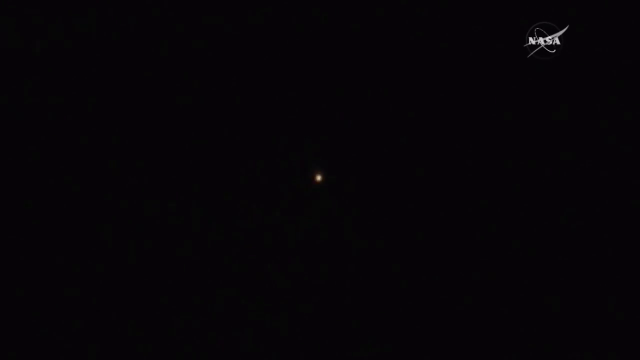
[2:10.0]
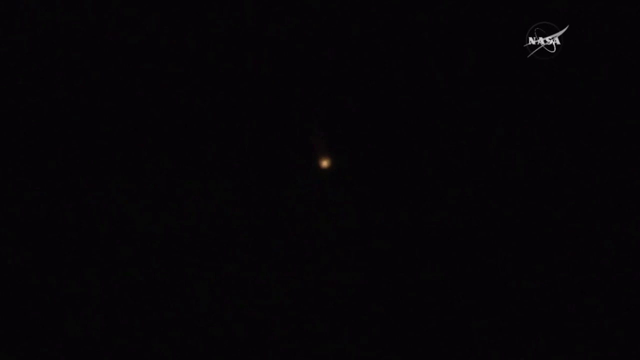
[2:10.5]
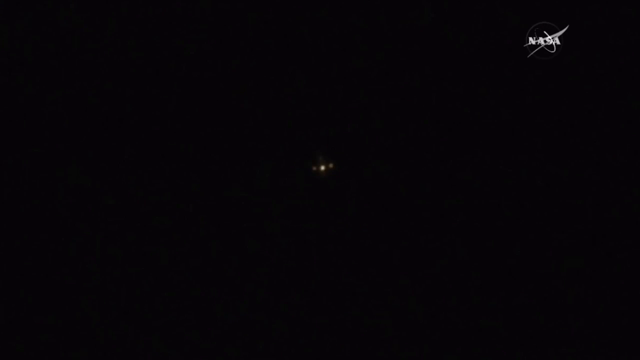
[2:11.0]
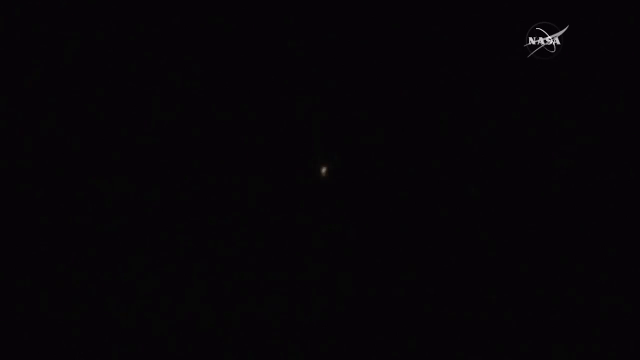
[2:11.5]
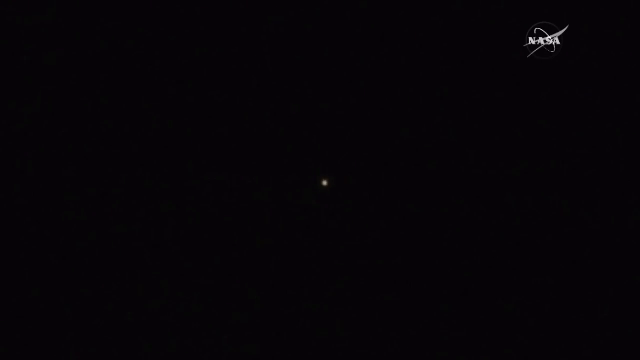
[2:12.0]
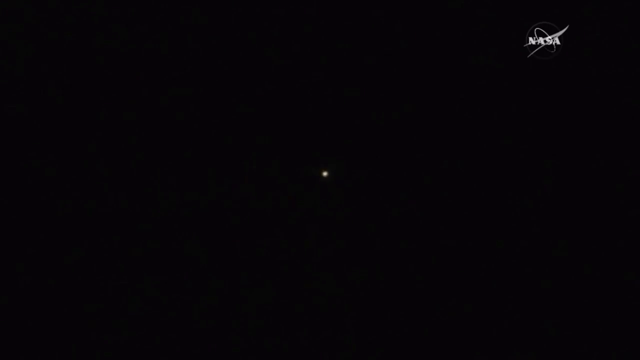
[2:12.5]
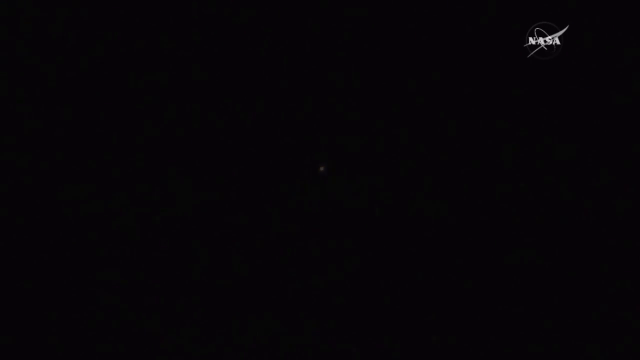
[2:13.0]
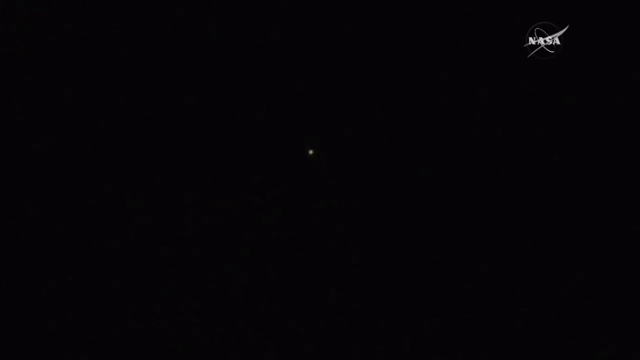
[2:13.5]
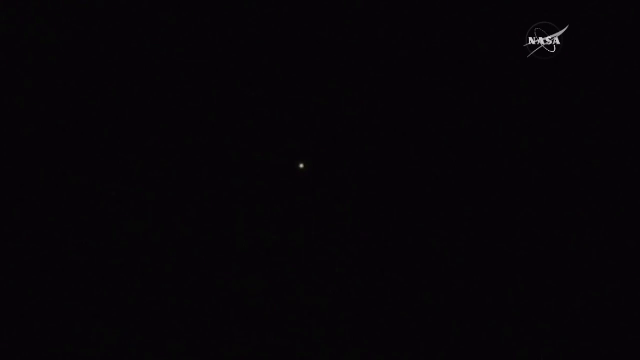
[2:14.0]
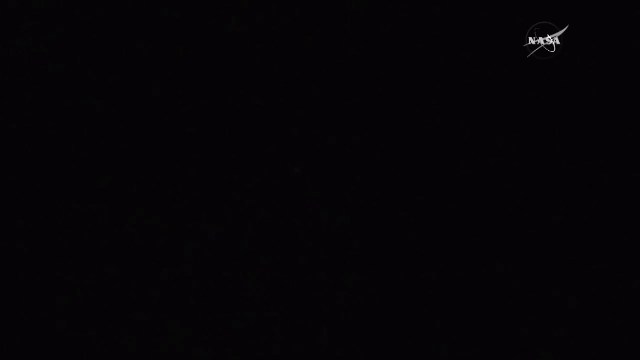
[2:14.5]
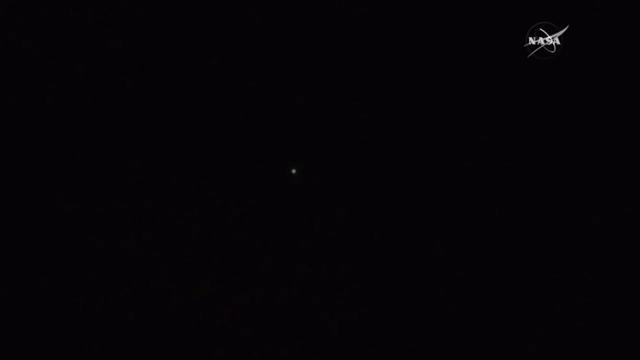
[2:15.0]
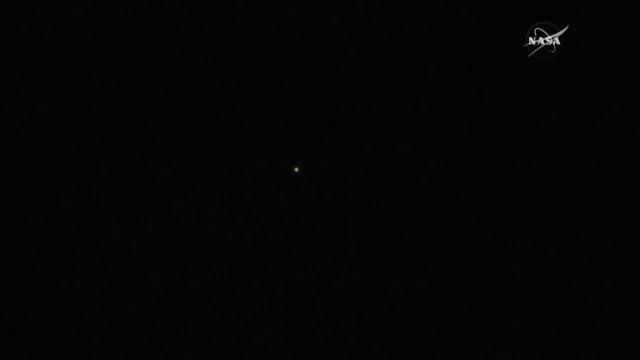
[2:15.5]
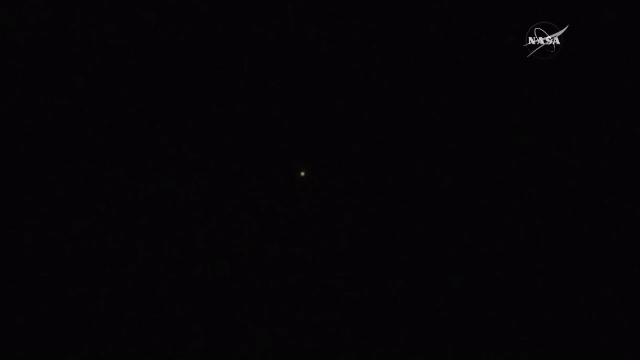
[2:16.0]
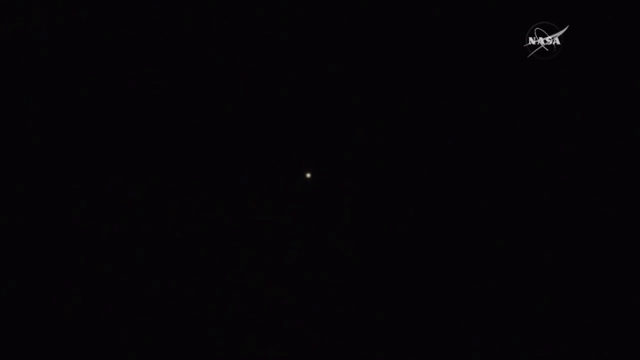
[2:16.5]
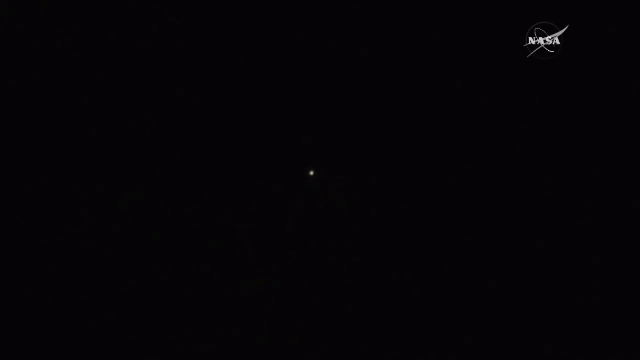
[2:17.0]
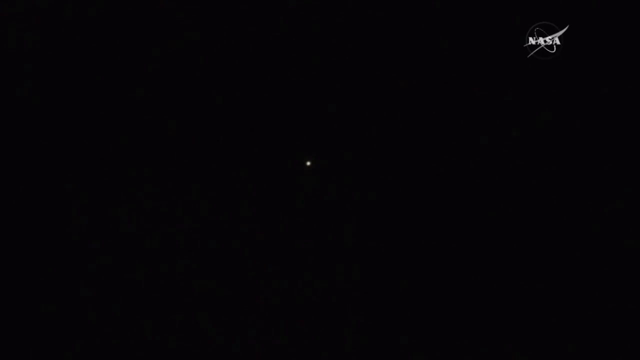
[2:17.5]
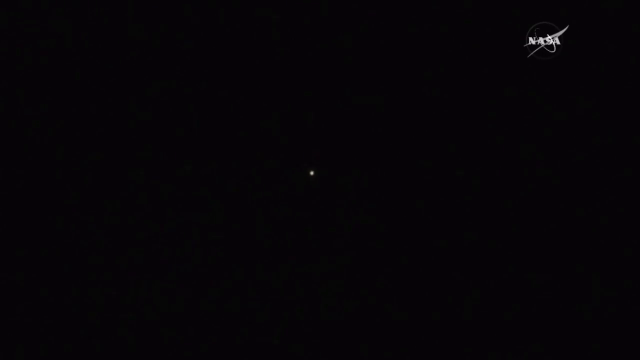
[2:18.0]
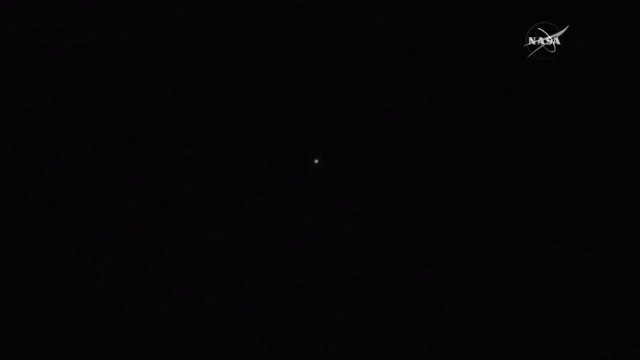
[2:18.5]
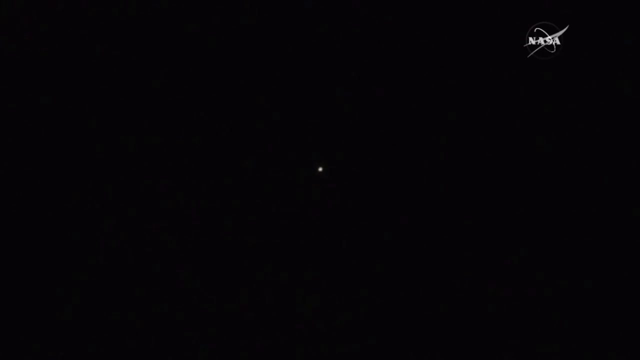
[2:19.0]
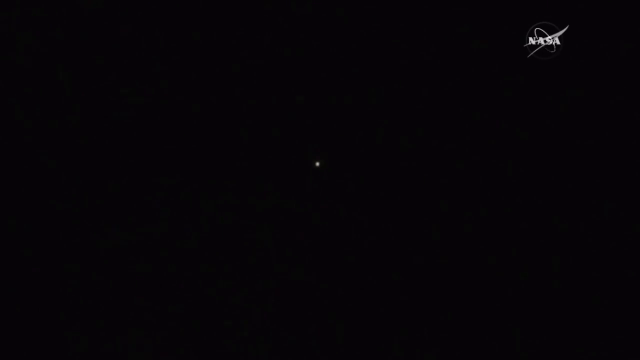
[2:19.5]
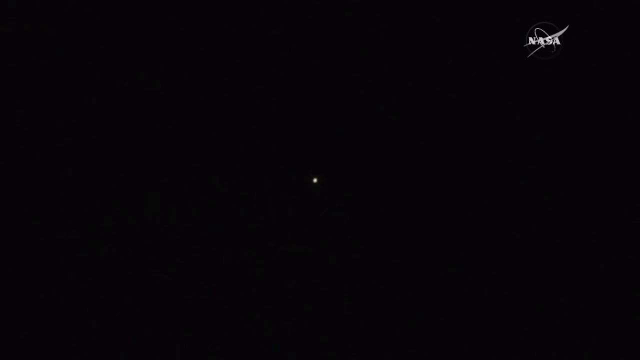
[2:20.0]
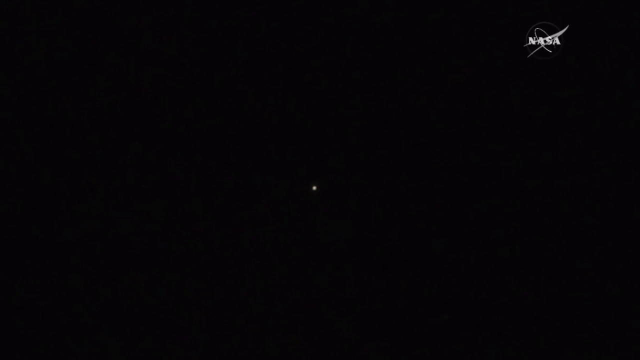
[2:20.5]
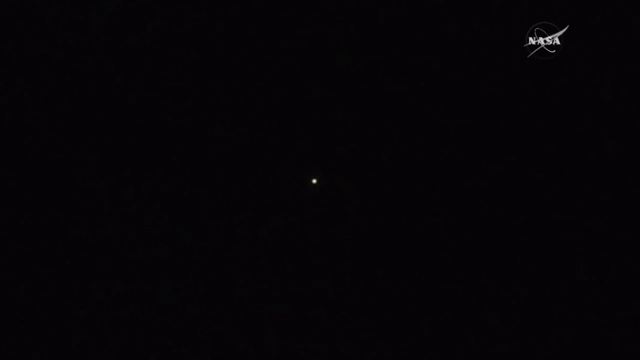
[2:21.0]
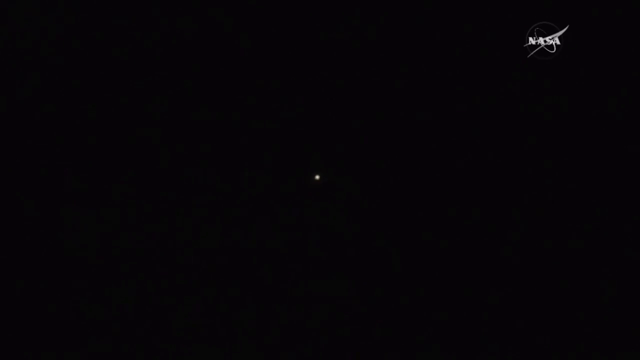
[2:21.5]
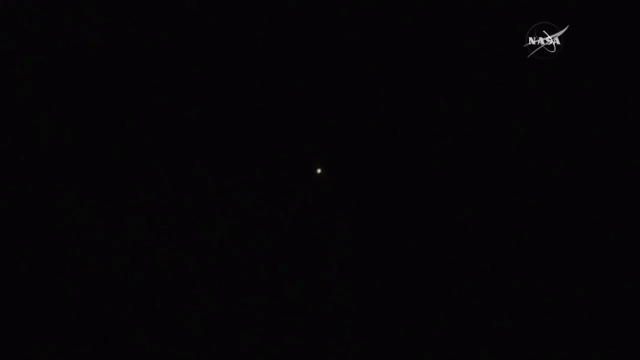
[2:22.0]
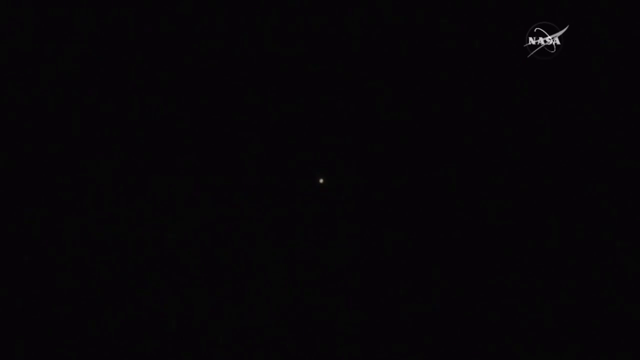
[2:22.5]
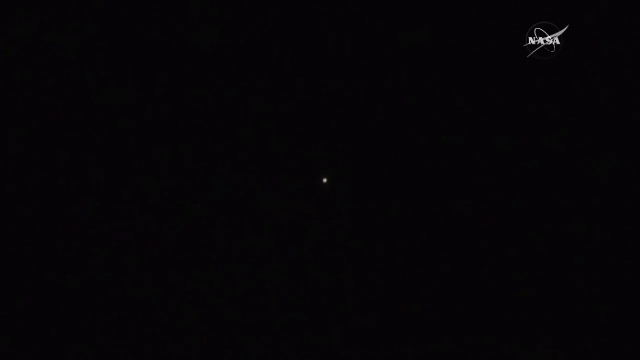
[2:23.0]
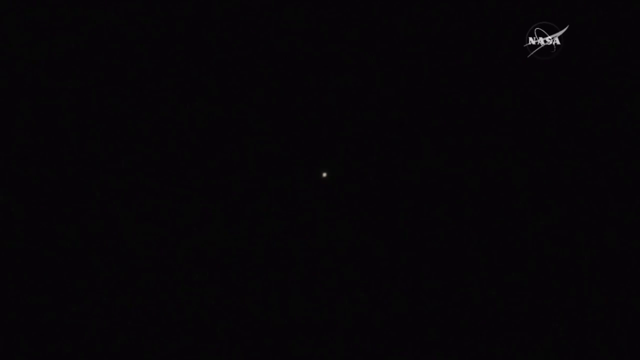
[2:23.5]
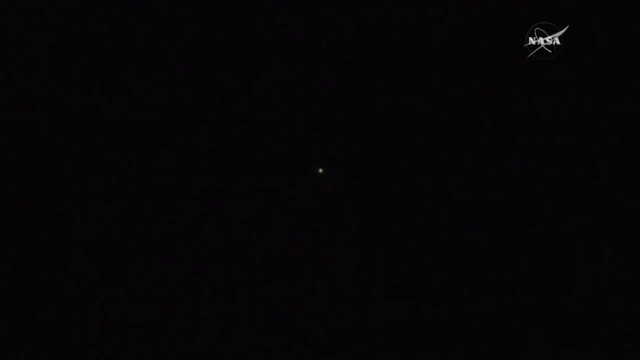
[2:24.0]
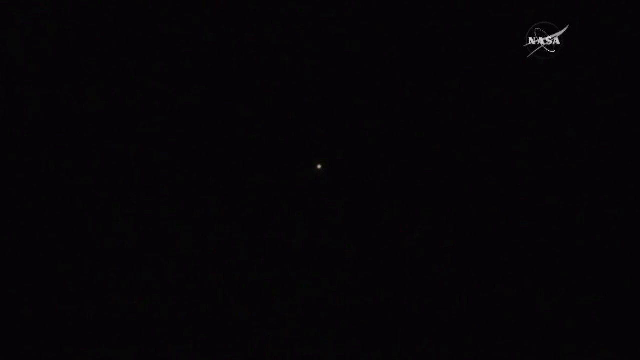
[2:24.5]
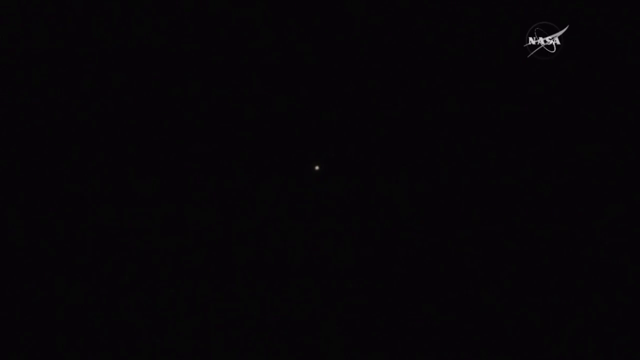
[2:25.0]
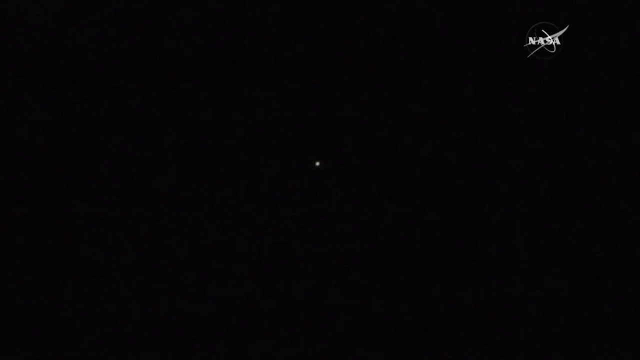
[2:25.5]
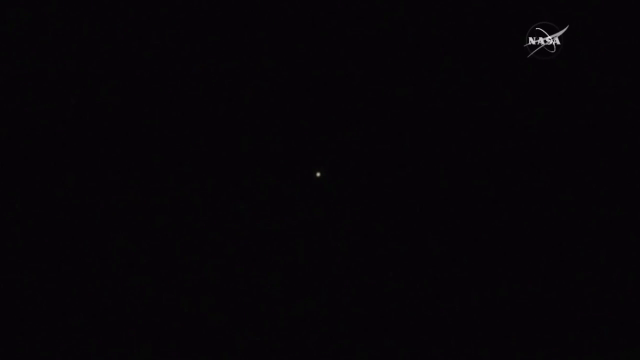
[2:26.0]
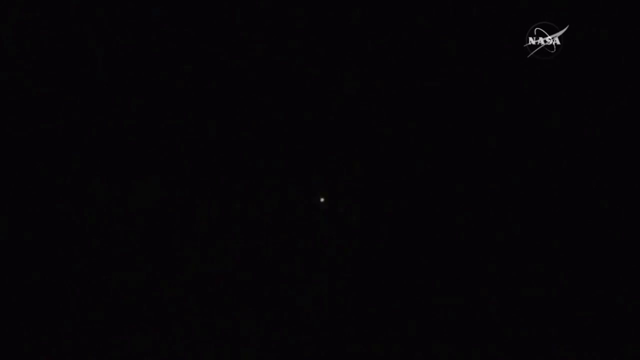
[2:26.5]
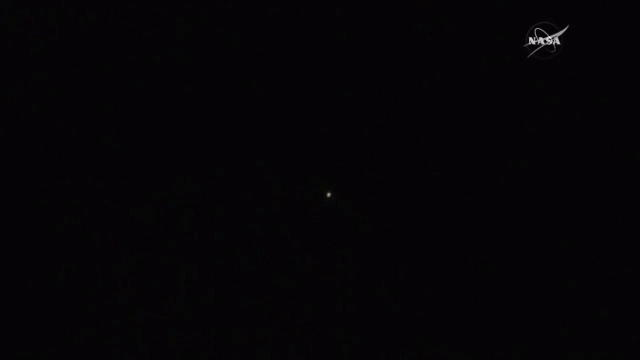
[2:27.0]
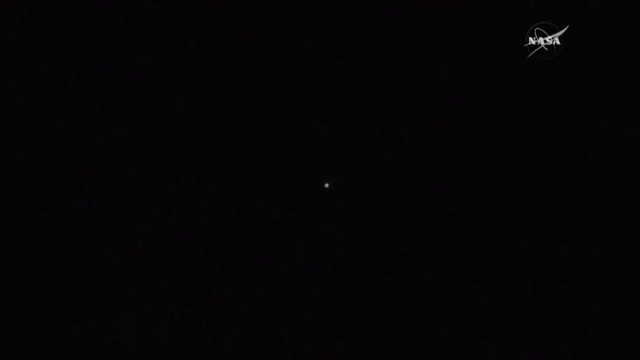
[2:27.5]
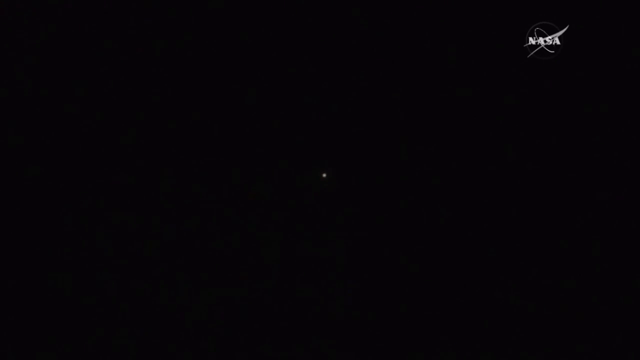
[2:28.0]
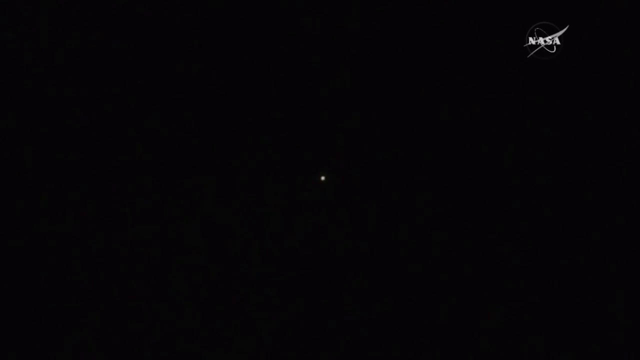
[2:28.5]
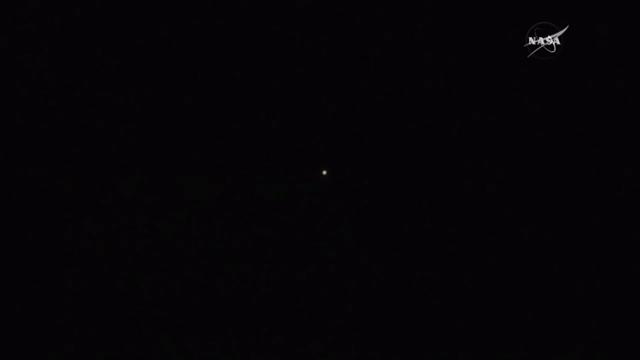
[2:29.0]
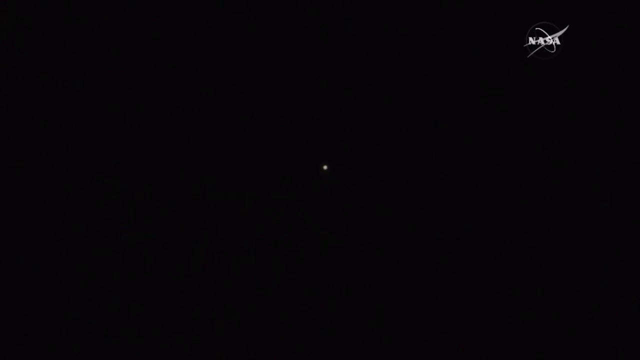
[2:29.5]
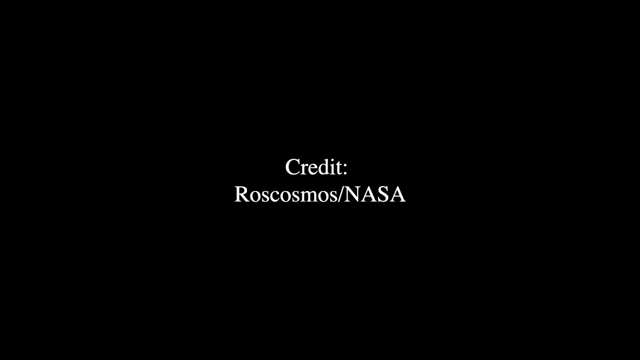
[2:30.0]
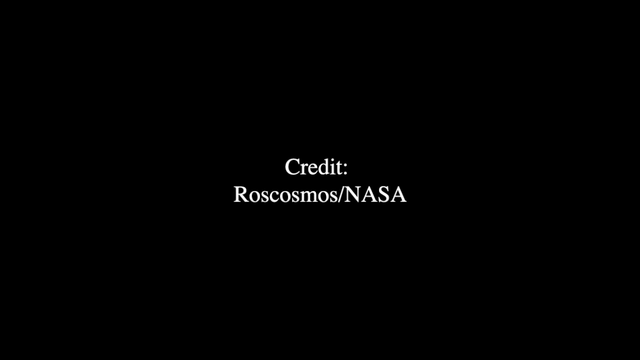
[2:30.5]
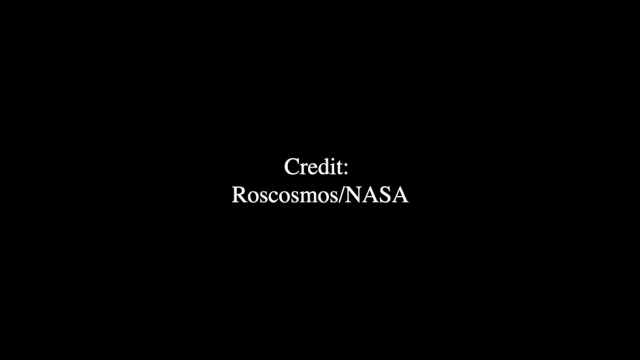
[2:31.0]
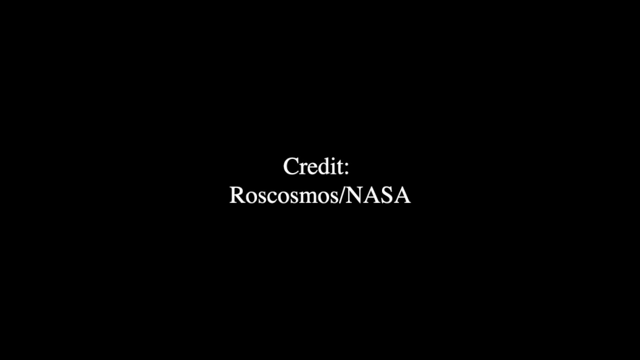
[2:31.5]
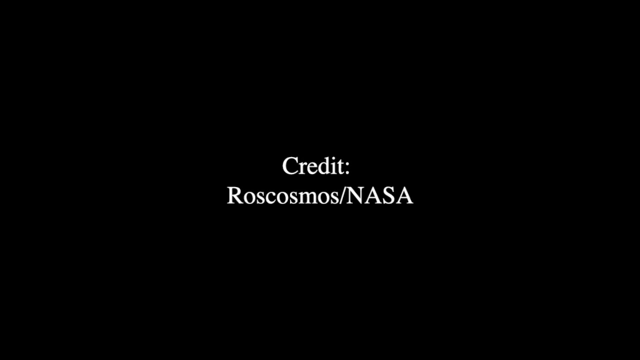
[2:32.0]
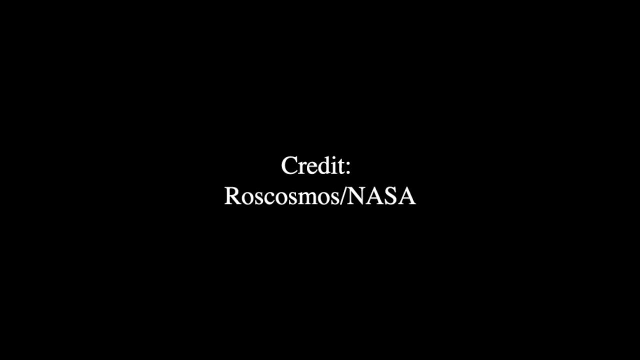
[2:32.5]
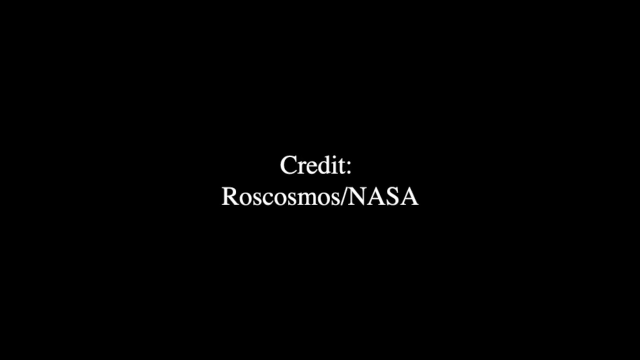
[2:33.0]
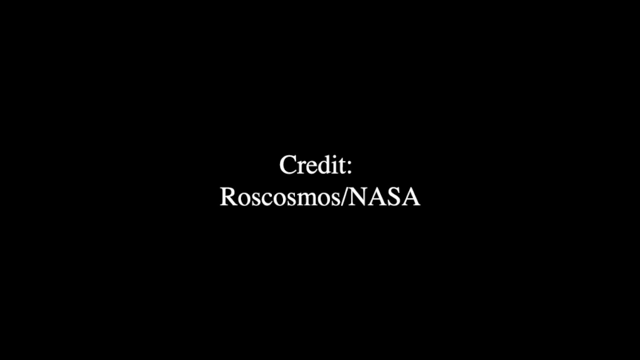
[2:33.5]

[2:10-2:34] The light eventually fades until it is just a white speck, where it had been a bright orange speck. The word "NASA" is at the top of the screen. Text reads "credit" with something ending in "R/NASA".